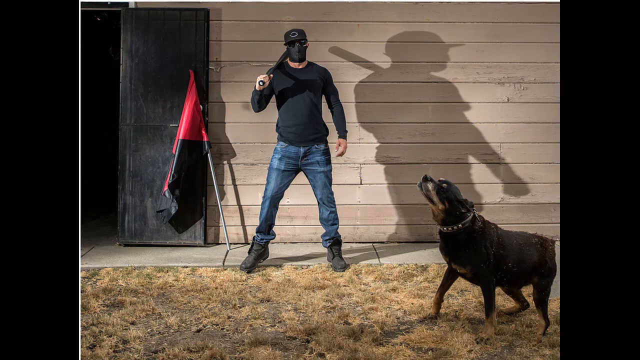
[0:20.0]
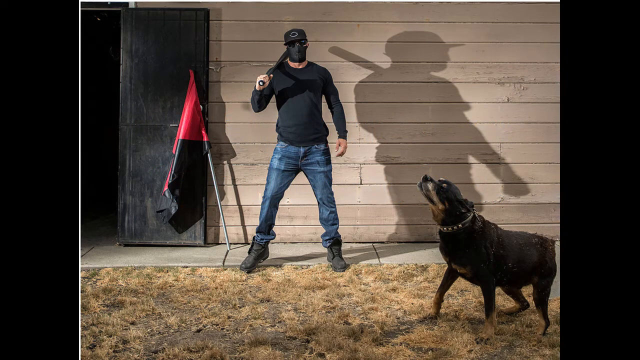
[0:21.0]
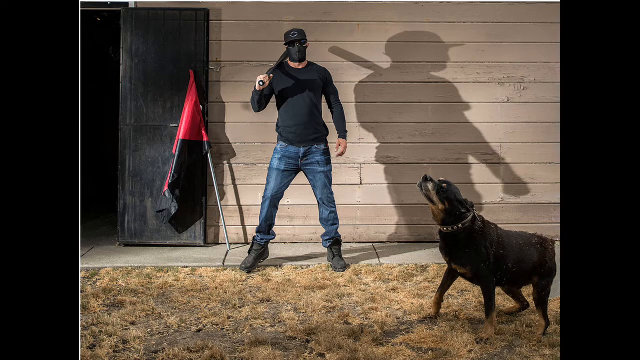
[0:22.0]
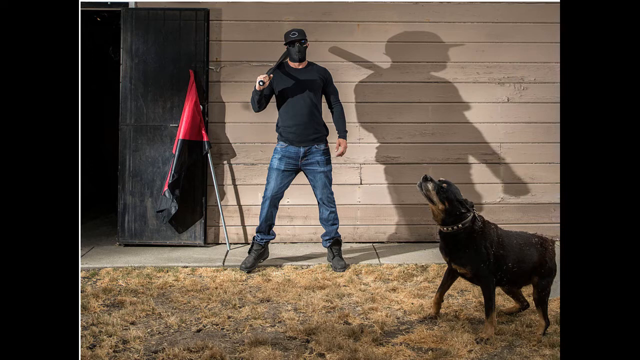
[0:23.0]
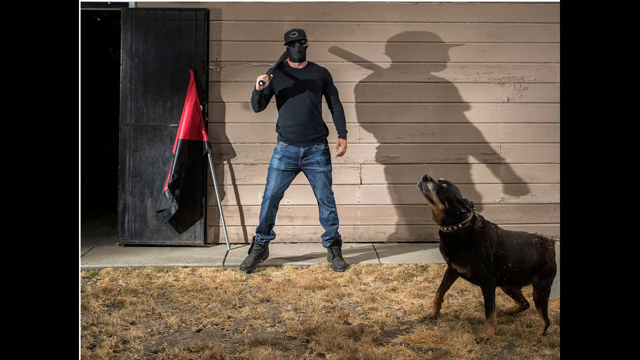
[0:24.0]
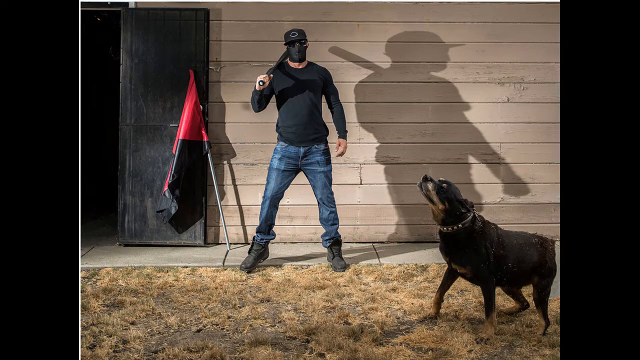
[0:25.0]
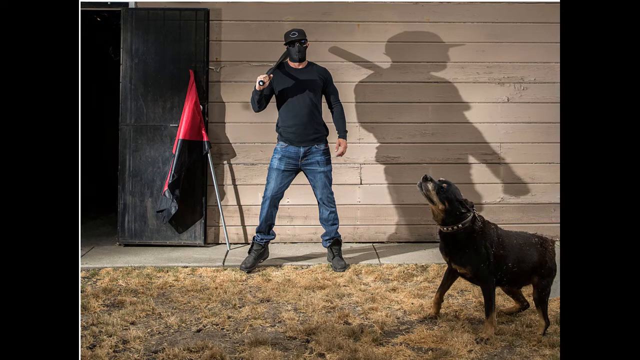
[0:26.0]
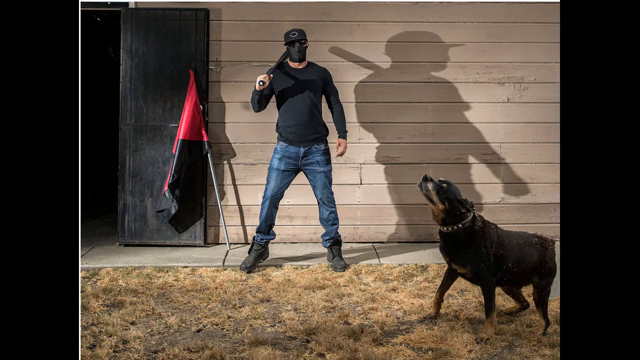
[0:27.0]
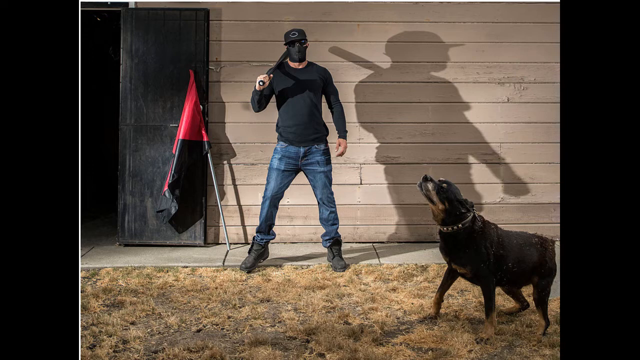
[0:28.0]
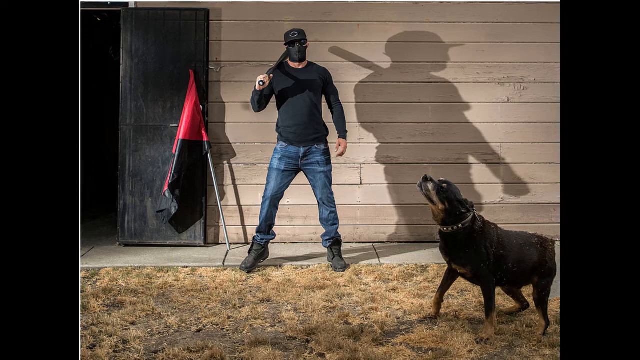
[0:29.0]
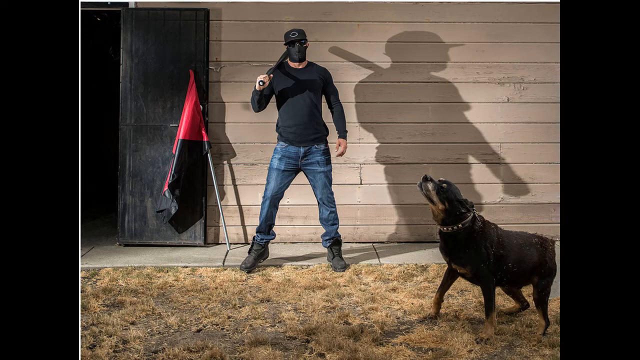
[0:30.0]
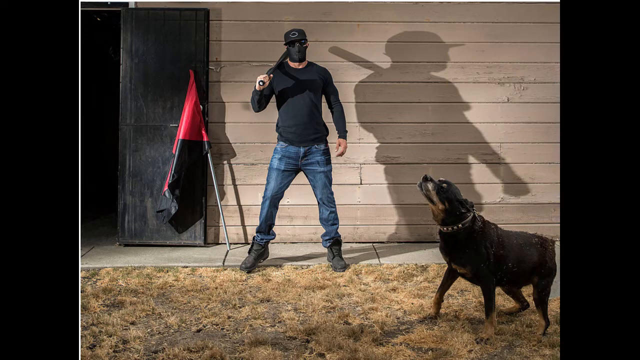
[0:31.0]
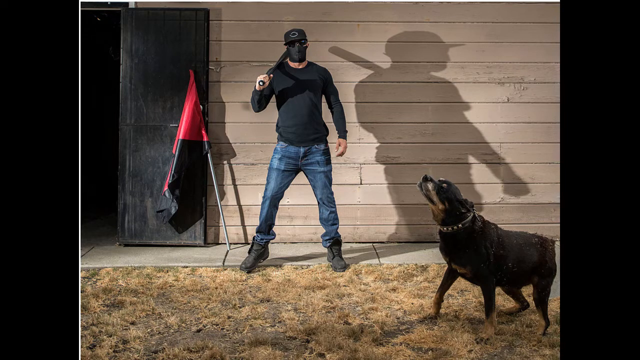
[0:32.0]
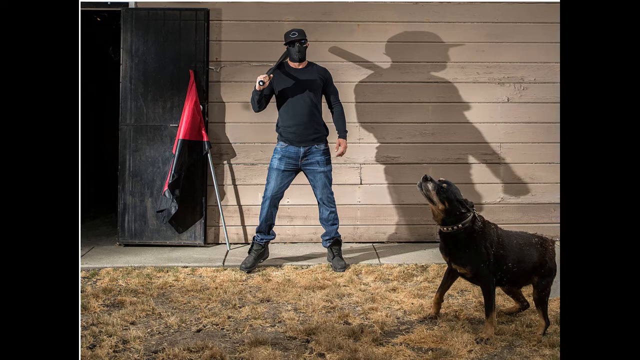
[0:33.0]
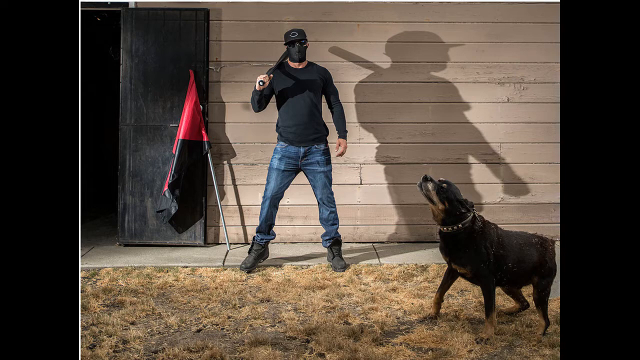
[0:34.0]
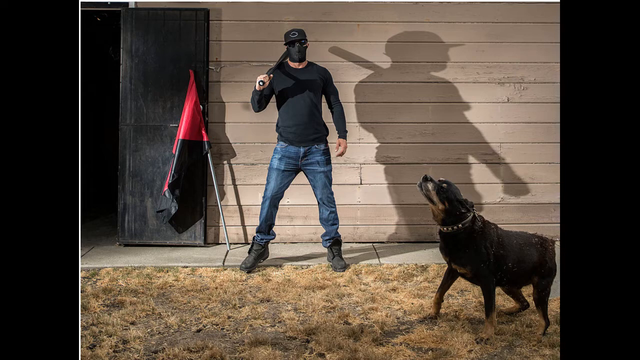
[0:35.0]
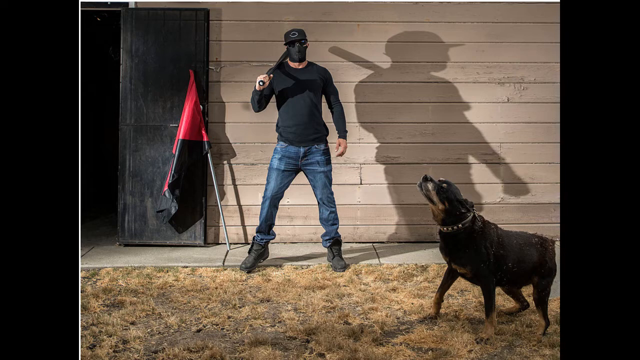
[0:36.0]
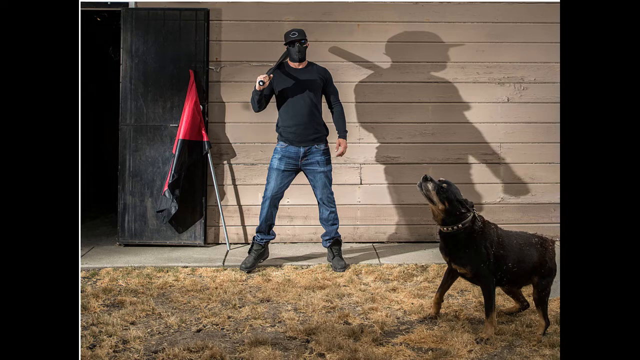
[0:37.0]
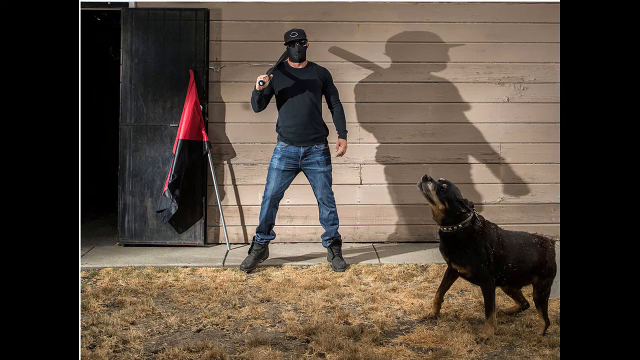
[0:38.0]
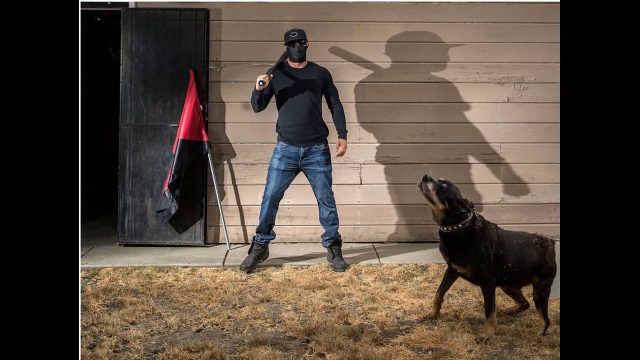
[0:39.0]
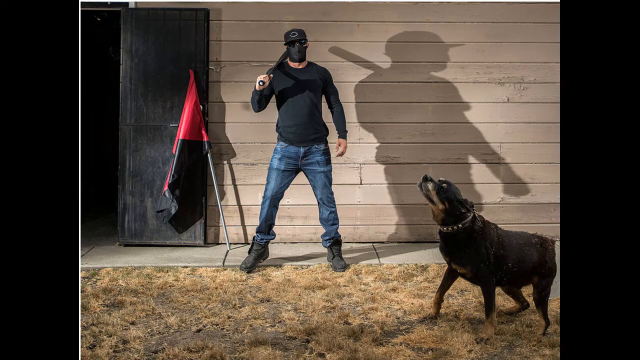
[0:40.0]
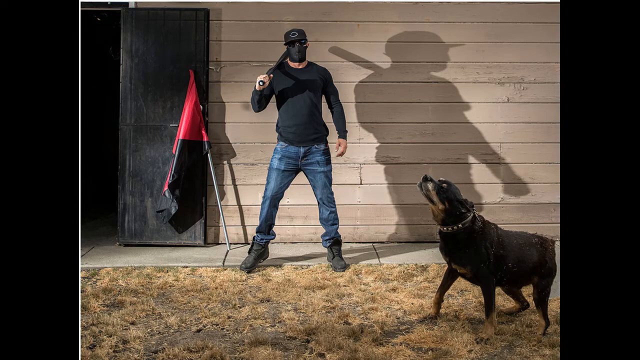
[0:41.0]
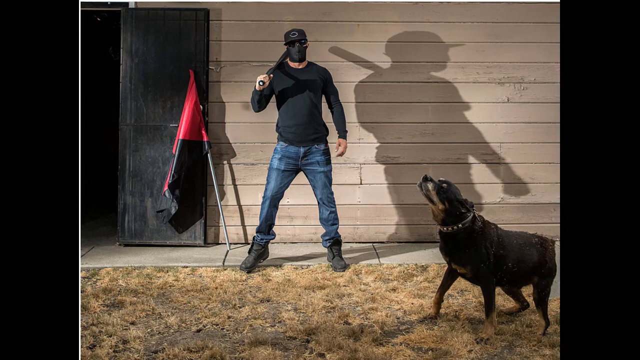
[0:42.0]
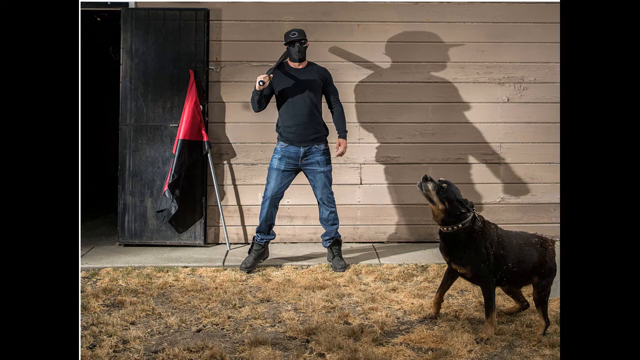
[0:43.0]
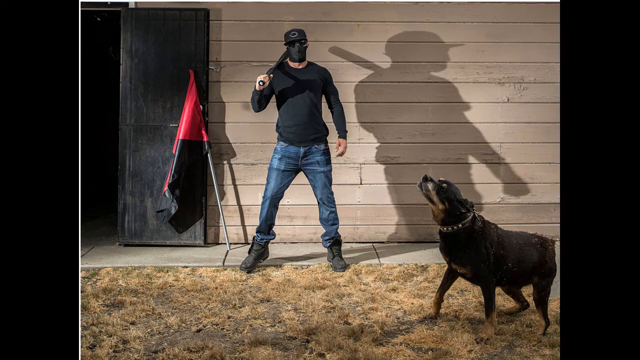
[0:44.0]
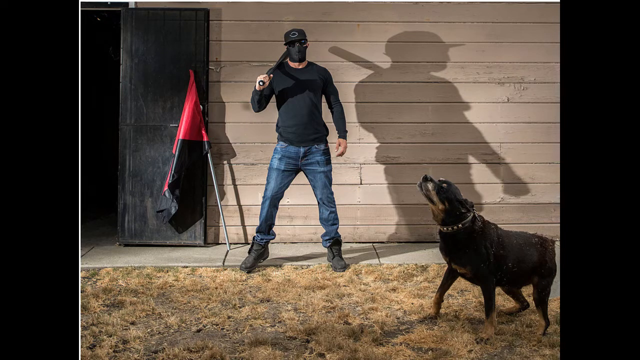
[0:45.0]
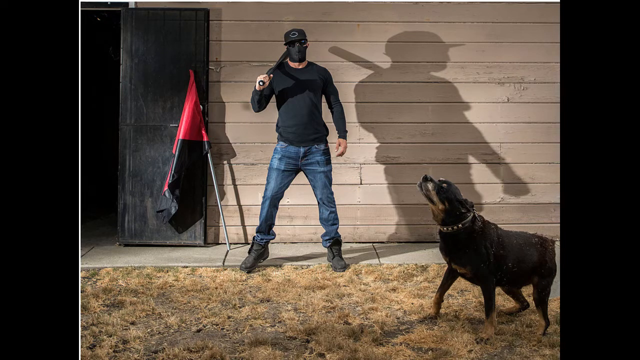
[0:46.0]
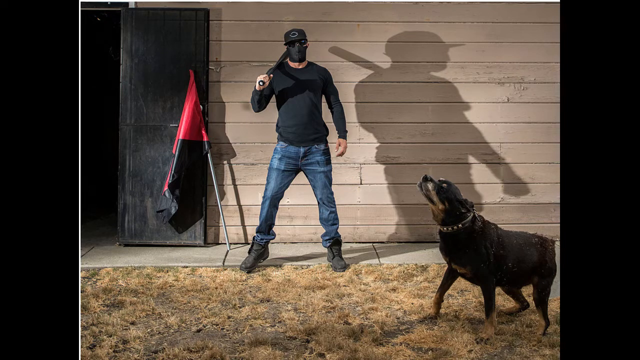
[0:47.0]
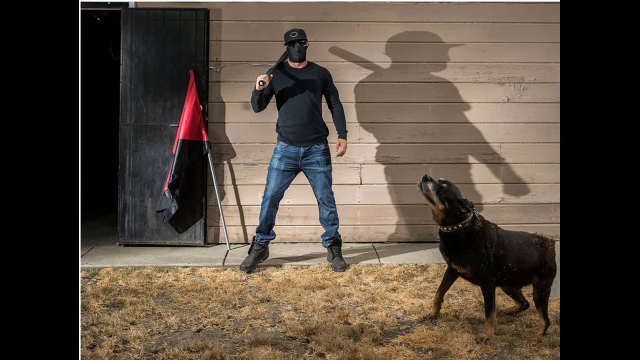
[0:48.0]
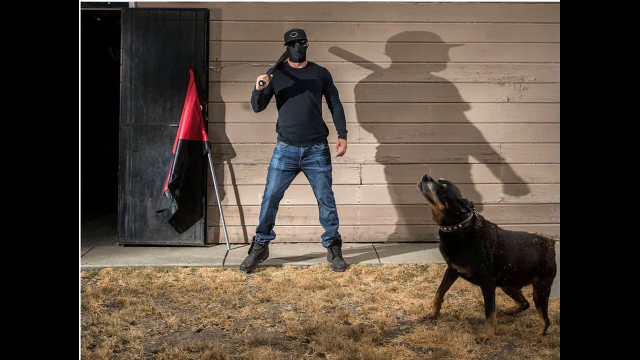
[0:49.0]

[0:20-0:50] A fair use disclaimer that includes the copyright laws of the United States is shown on a dark blue background. The patriotic warrior media logo follows, in patriotic colours of white, red and blue, with a blue person holding a binocular or a camera. Next is the yellow and black Proud Boys media logo, then the patriotic warrior podcast; the video seems to have a patriotic theme. A man holds a black stick over his arm. He wears a black cap, a black mask, a black T-shirt, blue jeans and black boots, and stands in front of a black door. A dog in front of him seems to be a pit bull; it is black, has a chain on its neck, and stands on grass that seems not well kept. The words "my apologies to the echo" are written in blue. The man's shadow is on the cream walls. A red and black flag is just beside the man, leaning on the black door.